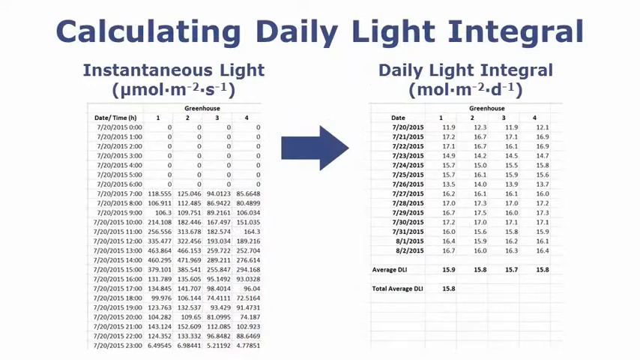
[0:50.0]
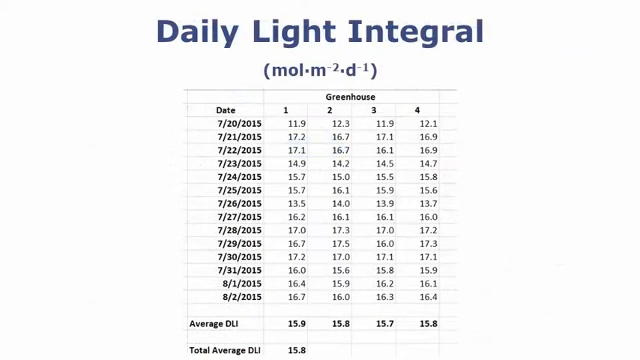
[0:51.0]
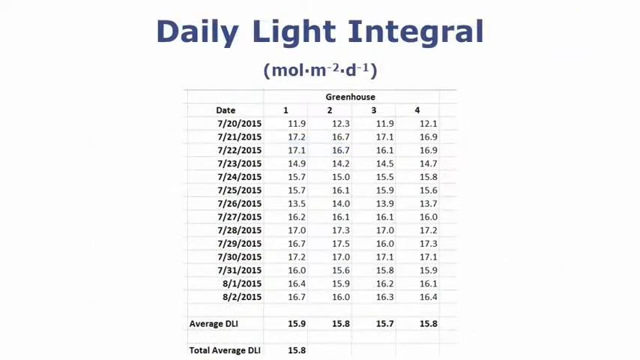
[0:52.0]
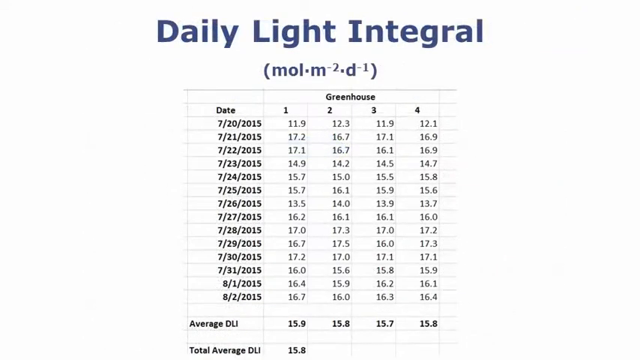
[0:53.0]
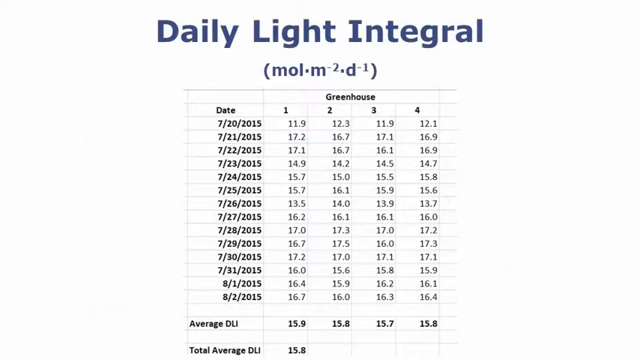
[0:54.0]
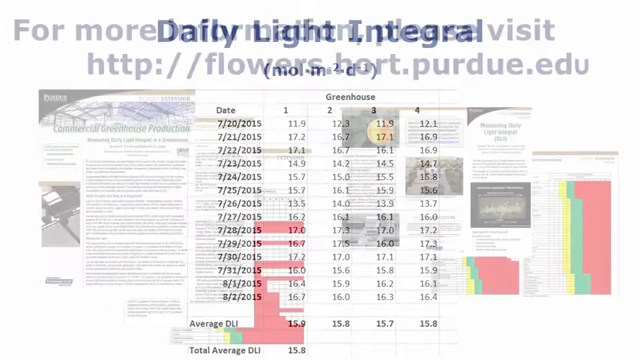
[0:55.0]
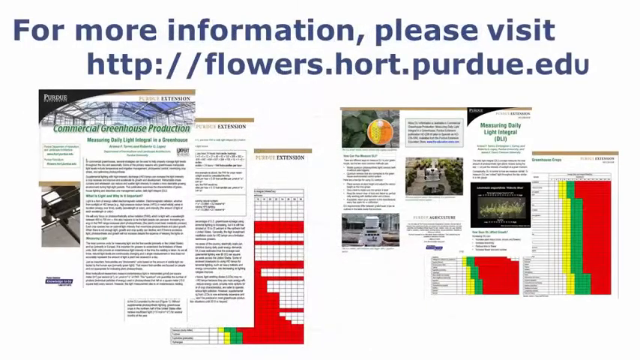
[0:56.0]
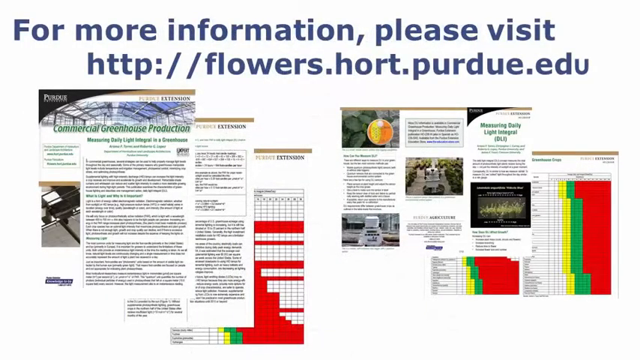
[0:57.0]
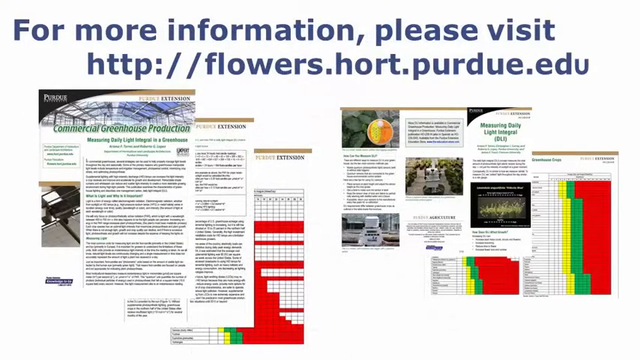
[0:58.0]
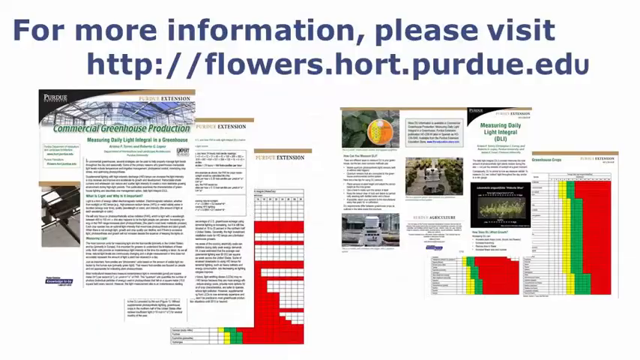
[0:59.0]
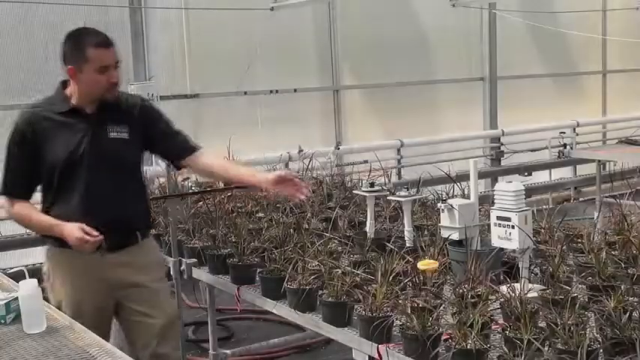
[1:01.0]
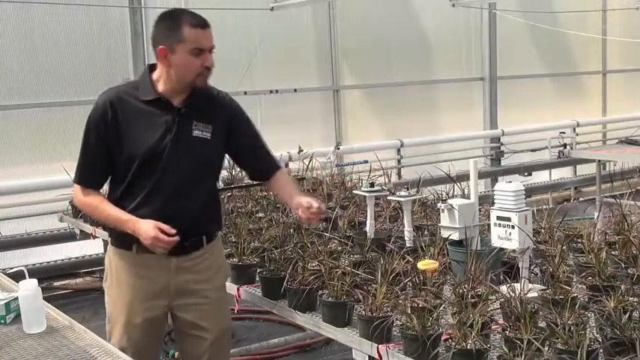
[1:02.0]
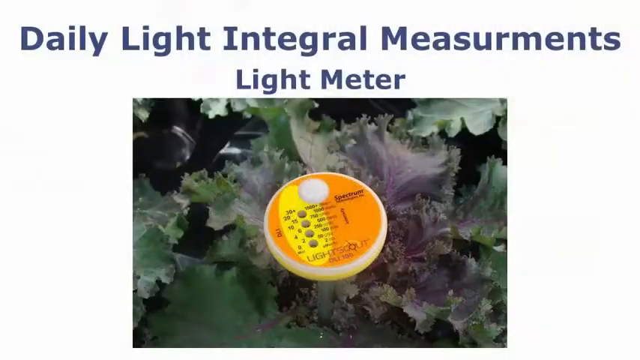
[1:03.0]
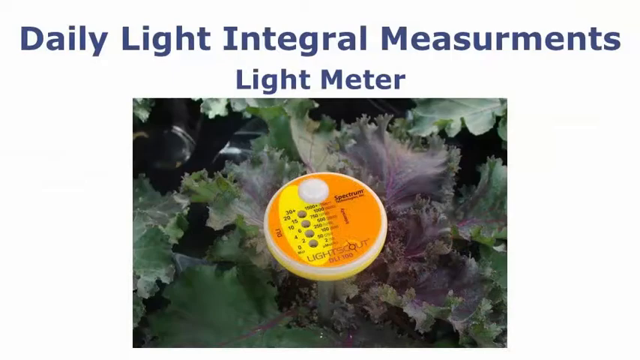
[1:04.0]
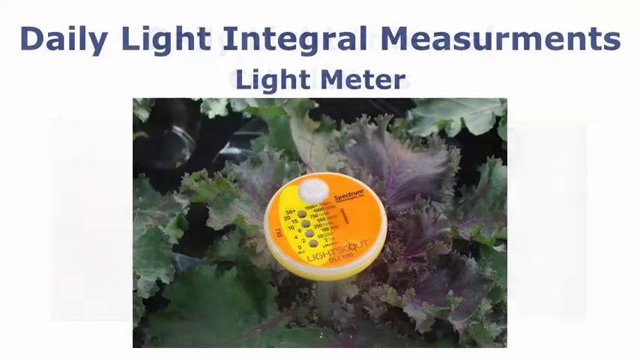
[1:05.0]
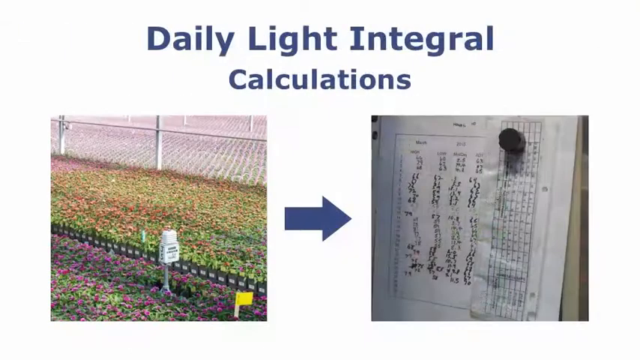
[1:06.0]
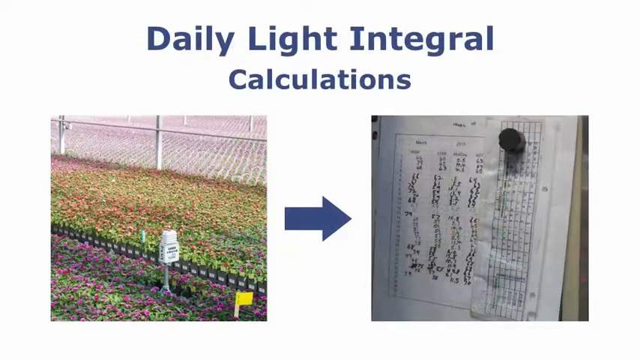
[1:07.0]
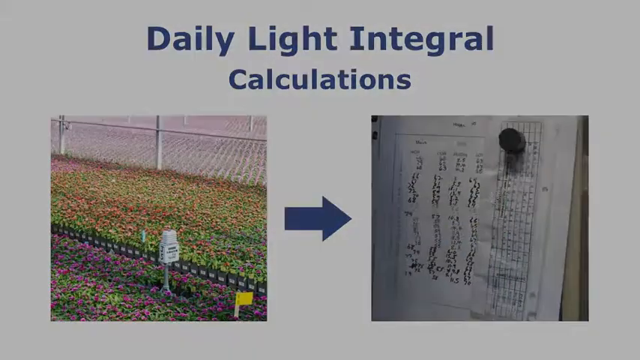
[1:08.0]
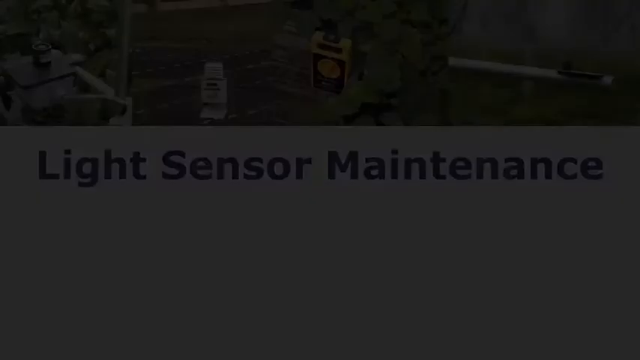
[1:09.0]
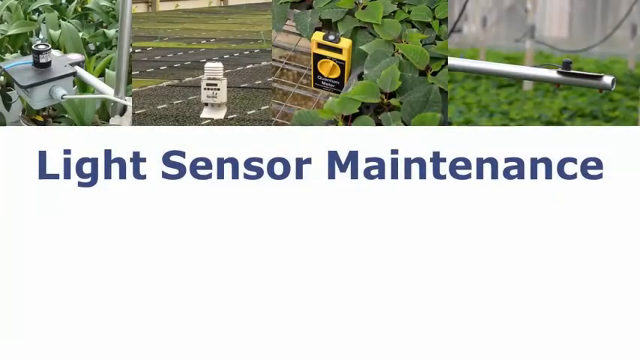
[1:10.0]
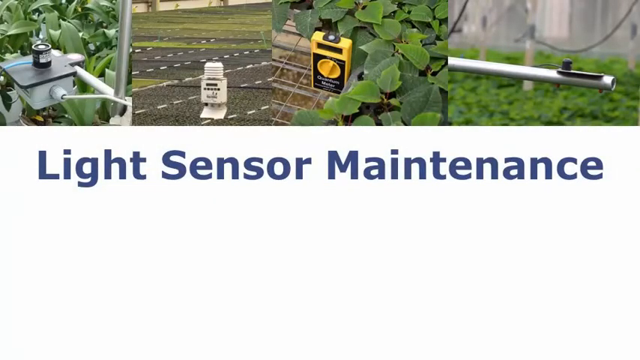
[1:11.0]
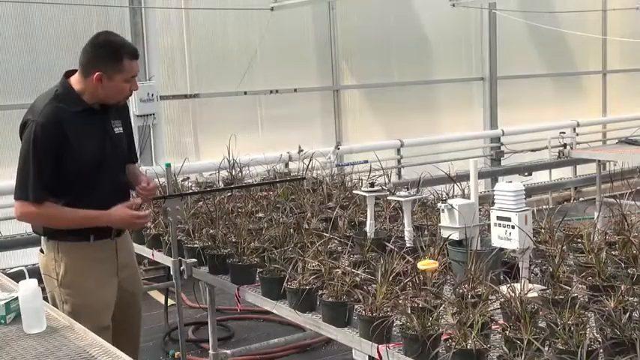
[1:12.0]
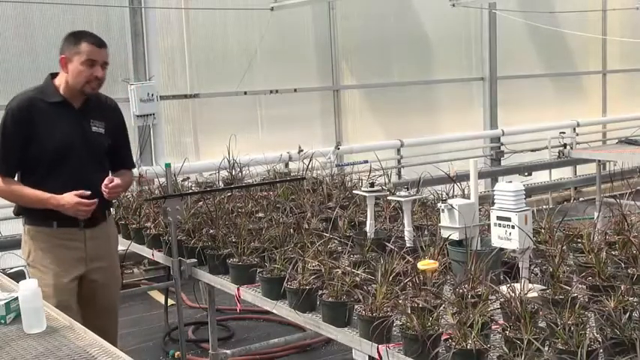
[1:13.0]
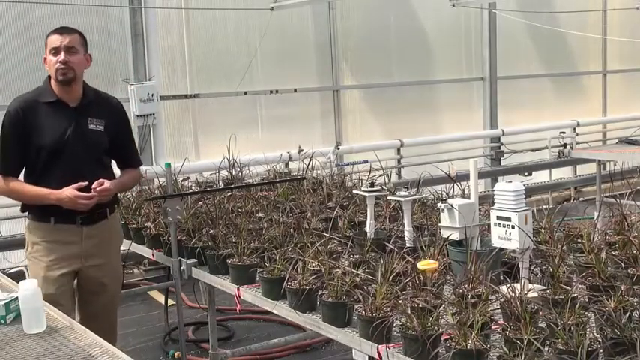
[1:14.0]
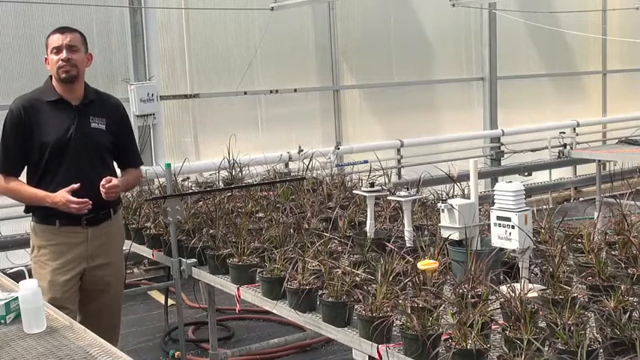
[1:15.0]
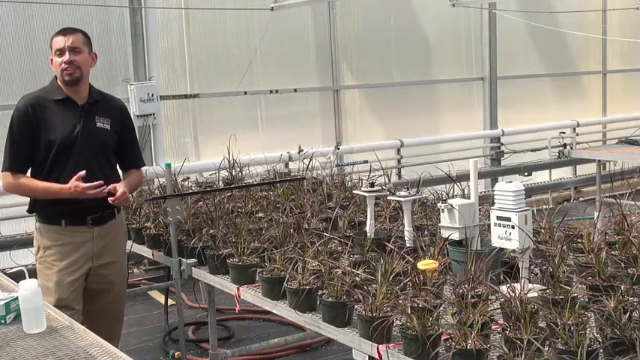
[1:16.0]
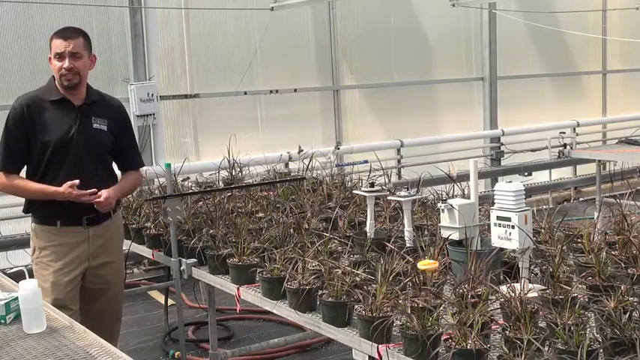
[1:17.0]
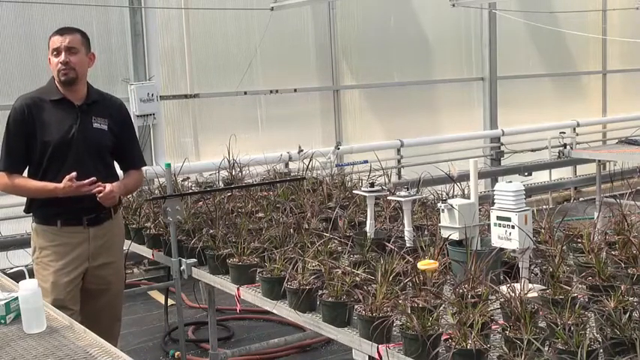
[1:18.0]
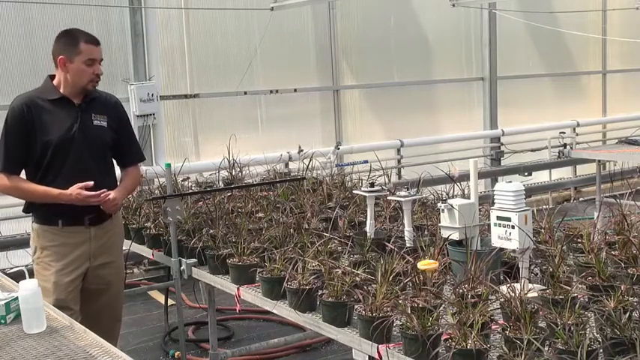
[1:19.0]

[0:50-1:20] At the top, in blue font, the text reads "Calculated Daily Light Integral," with the first letter of each word capitalized. The screen has two sections. The left side reads "instantaneous light" with units in parentheses that appear to be micromoles (a "µ" followed by "mol"), a dot, "m" to the negative two power, another dot, and "s" to the negative one power. A blue arrow is between the two charts, and a chart underneath reads "greenhouse," date/time, and one, two, three, four. The right side reads "daily light integral" with nearly the same formula, except there is a "d" instead of the "s" and no micro symbol. The screen then switches to a "daily light integral" display on which the earliest date looks like July 20th, 2015 and the latest looks like August 2nd, 2015. Text reads "for more information, please visit http://flowers.hort.purdue.edu." Next come the texts "daily light integral measurements," "light meter," "daily light integral calculations," and "light sensor maintenance." The video then briefly returns to the man.